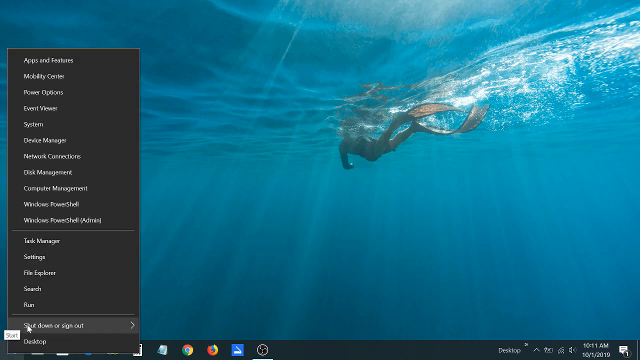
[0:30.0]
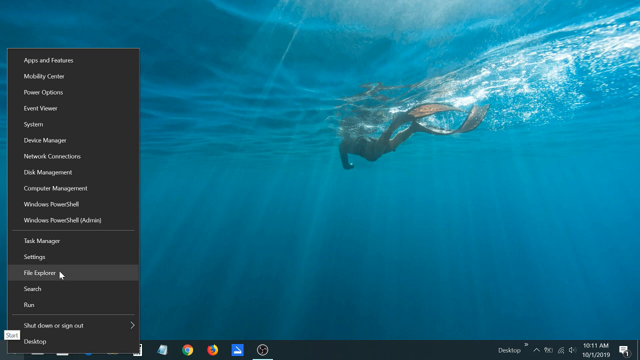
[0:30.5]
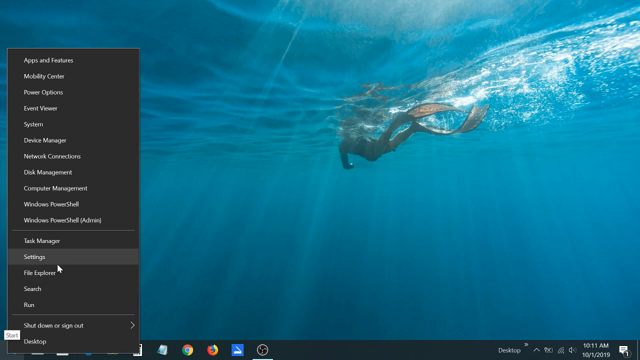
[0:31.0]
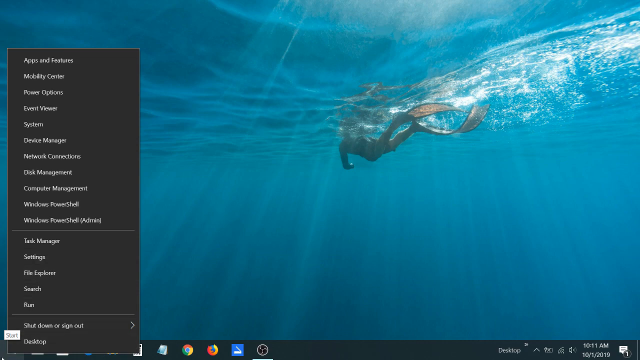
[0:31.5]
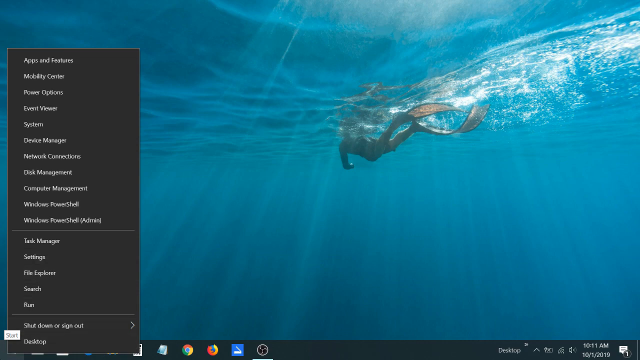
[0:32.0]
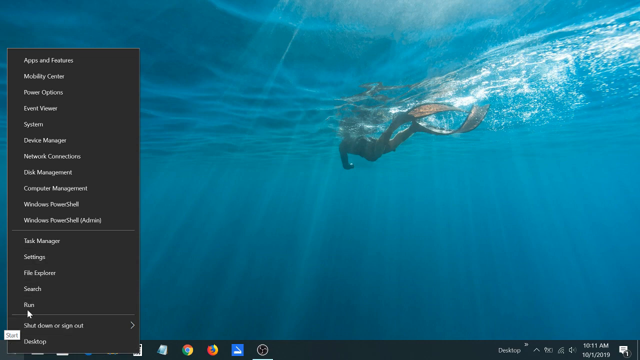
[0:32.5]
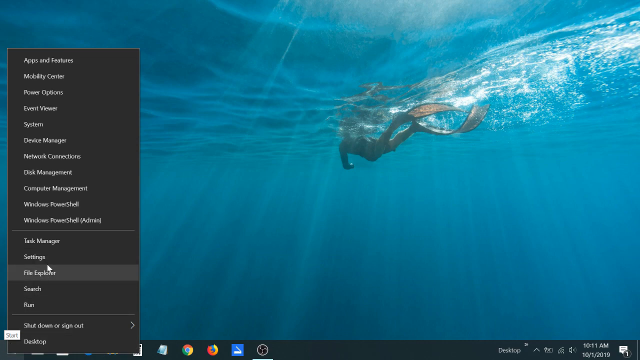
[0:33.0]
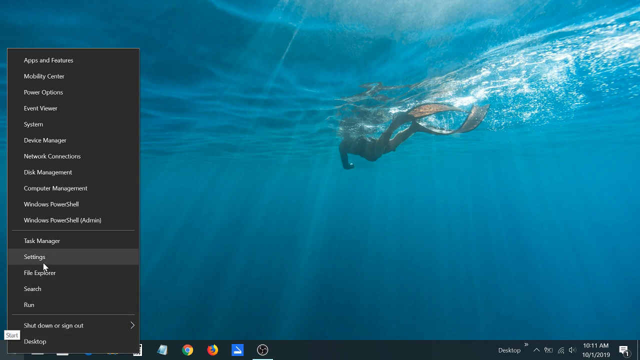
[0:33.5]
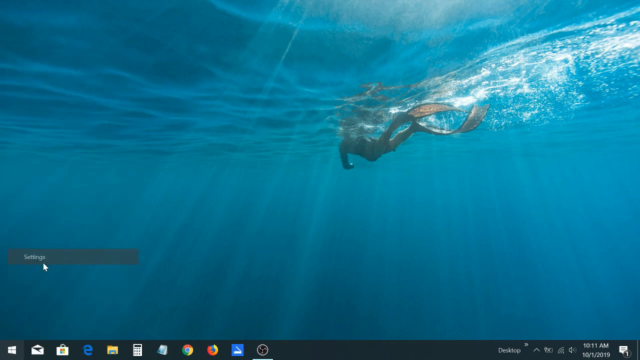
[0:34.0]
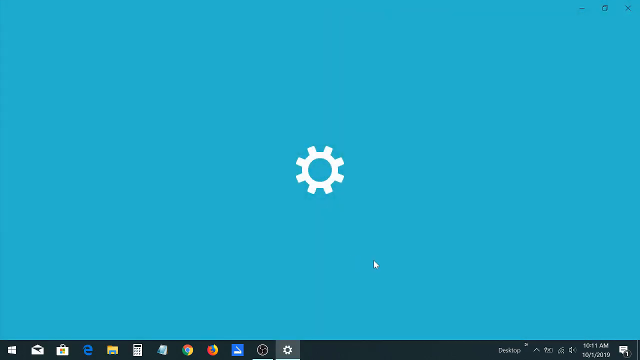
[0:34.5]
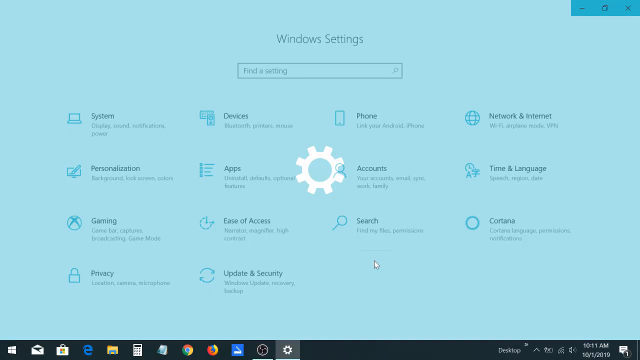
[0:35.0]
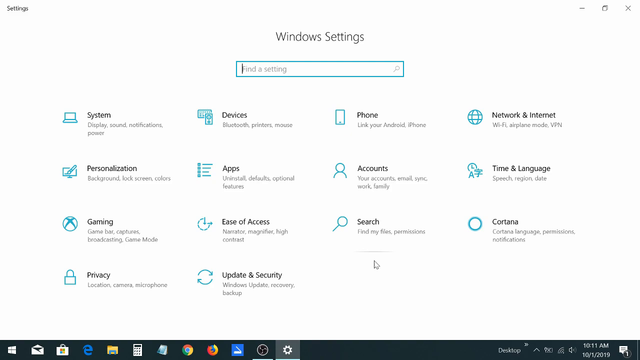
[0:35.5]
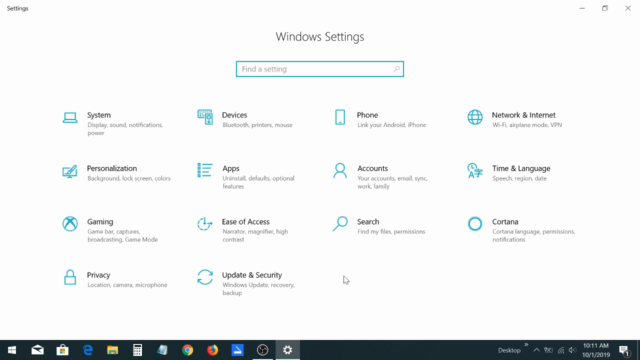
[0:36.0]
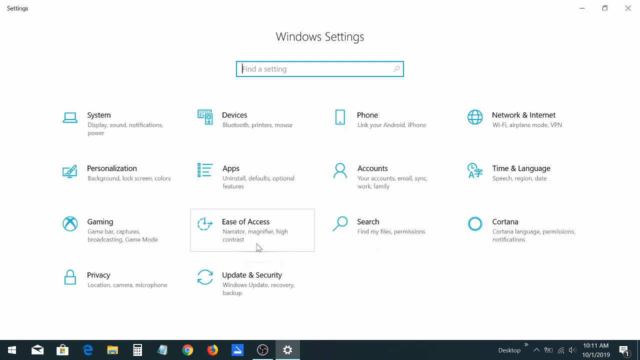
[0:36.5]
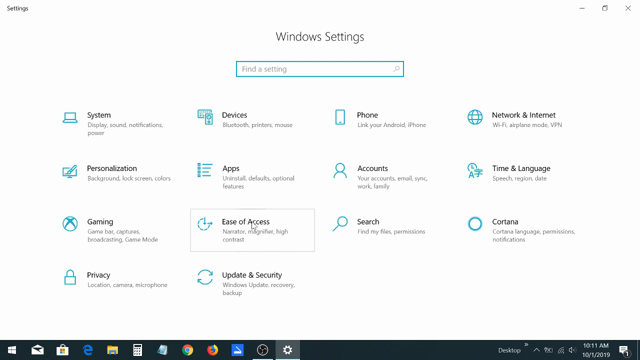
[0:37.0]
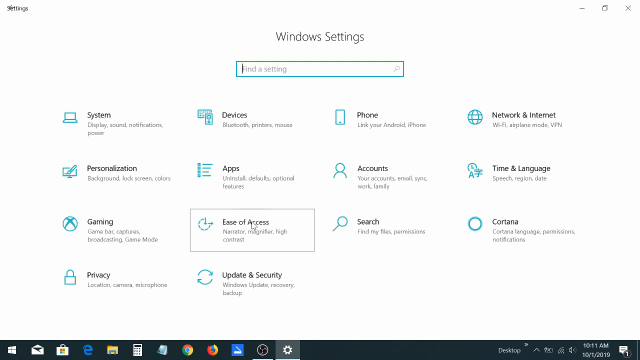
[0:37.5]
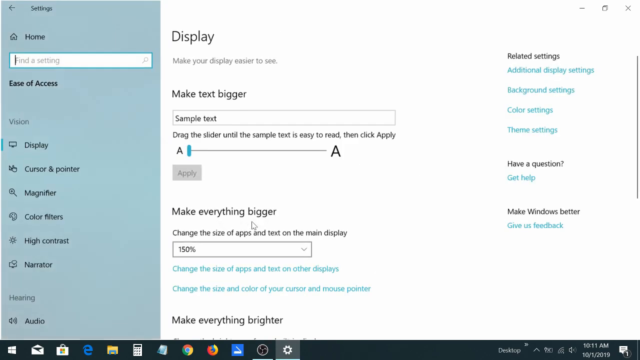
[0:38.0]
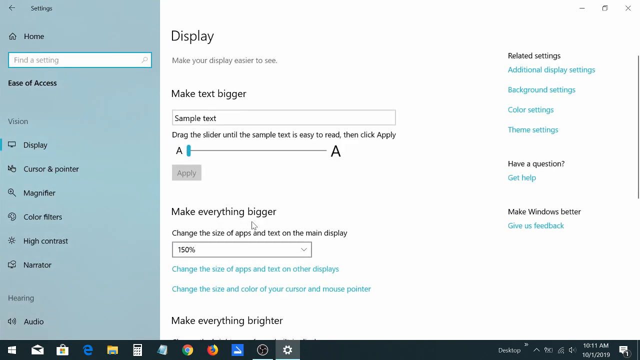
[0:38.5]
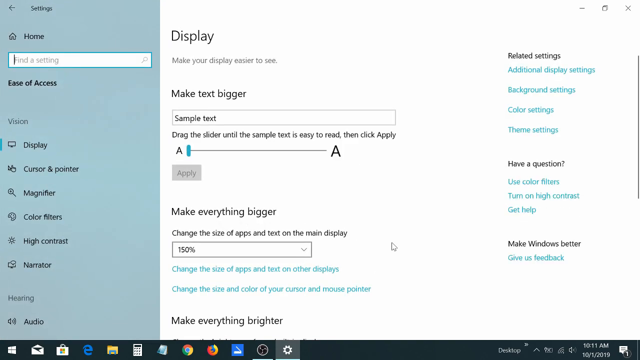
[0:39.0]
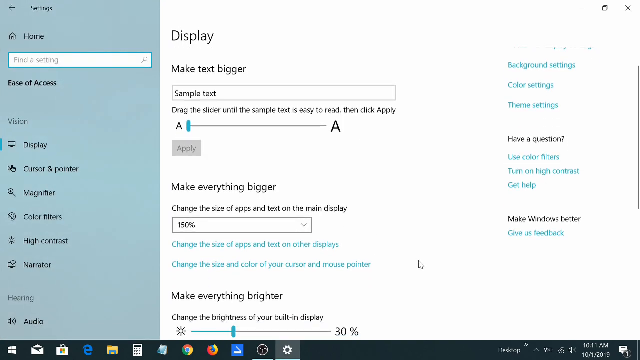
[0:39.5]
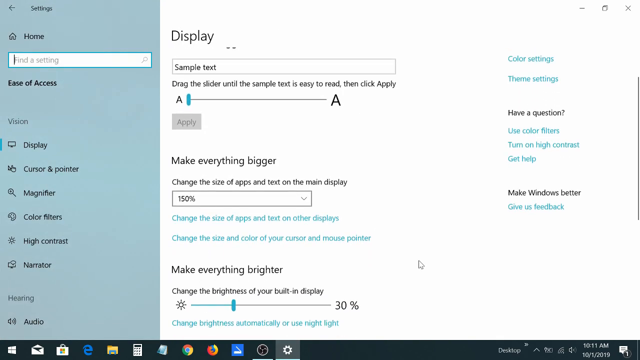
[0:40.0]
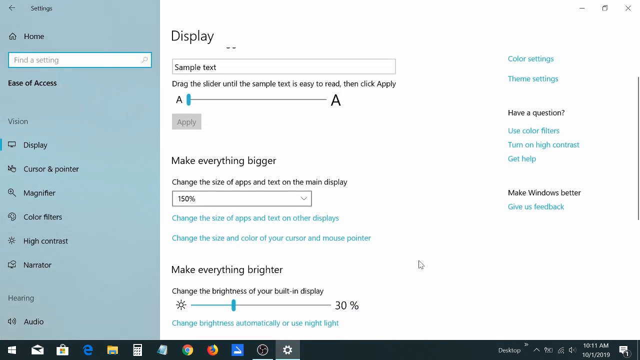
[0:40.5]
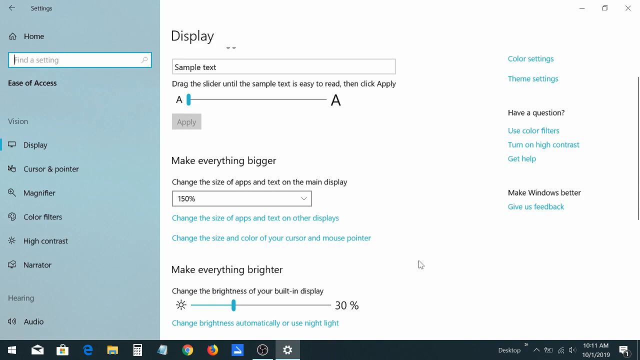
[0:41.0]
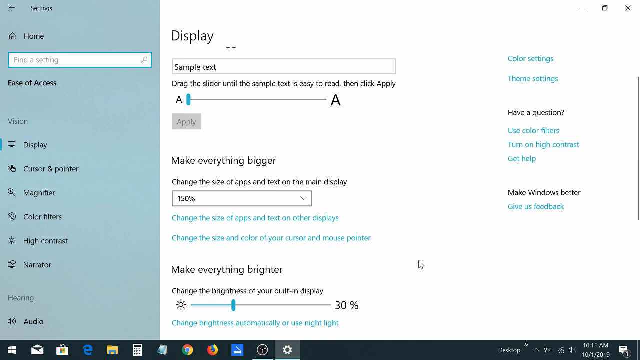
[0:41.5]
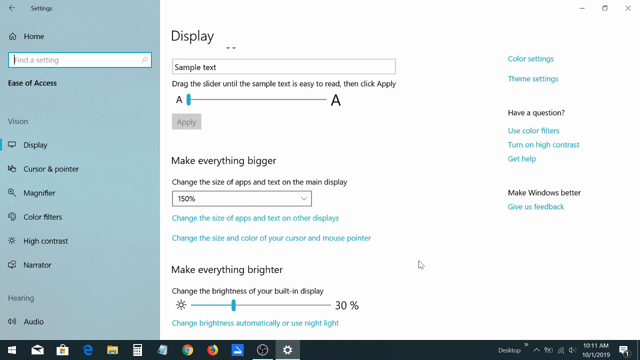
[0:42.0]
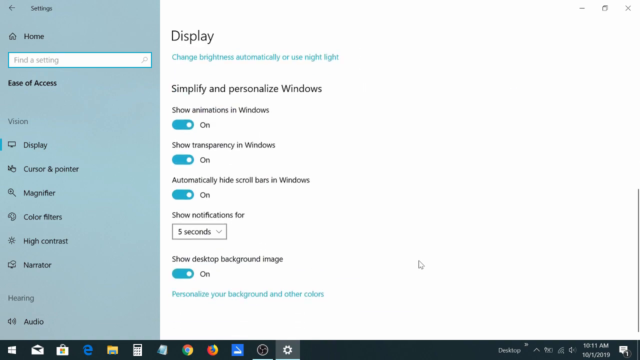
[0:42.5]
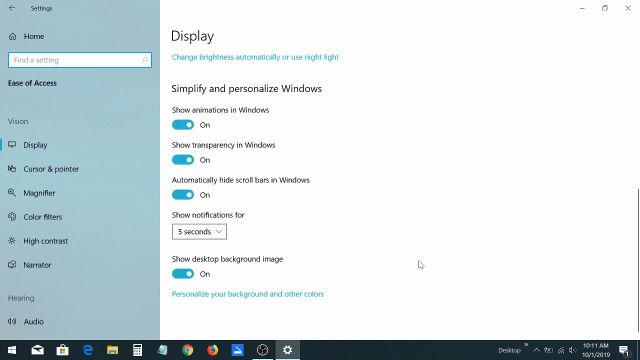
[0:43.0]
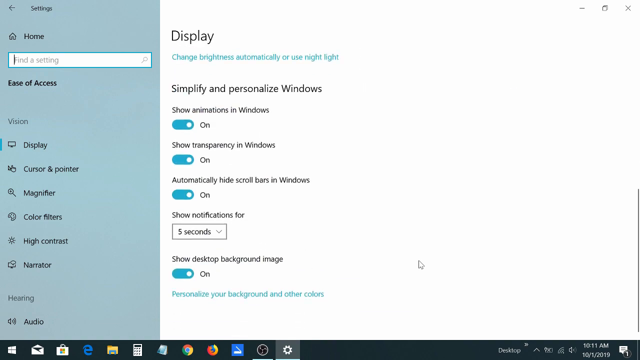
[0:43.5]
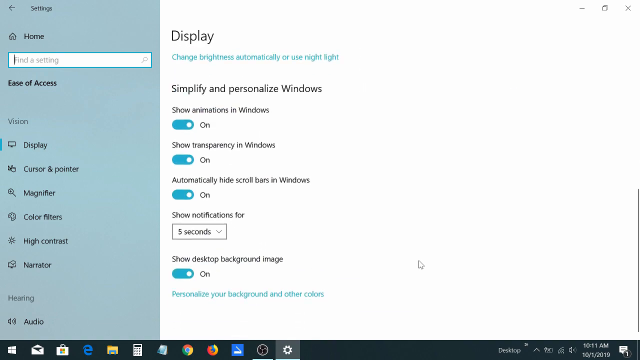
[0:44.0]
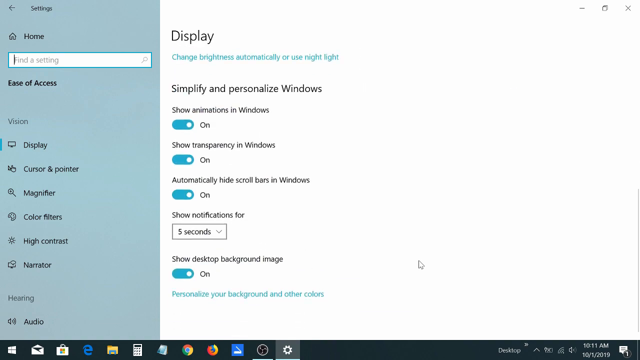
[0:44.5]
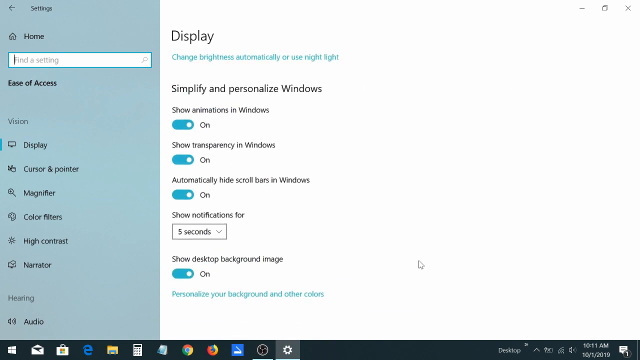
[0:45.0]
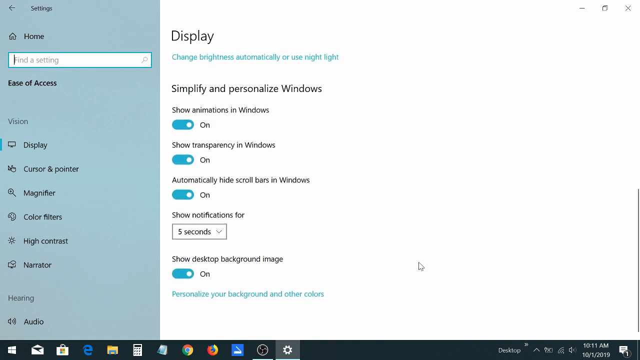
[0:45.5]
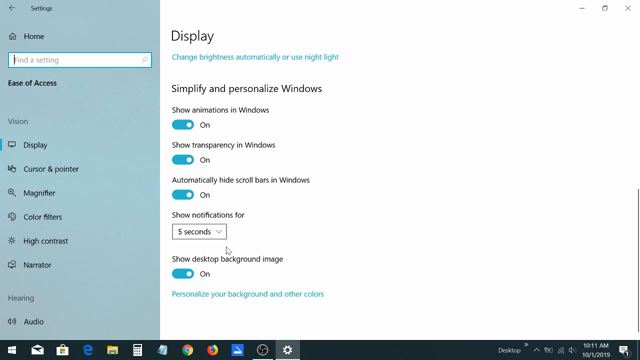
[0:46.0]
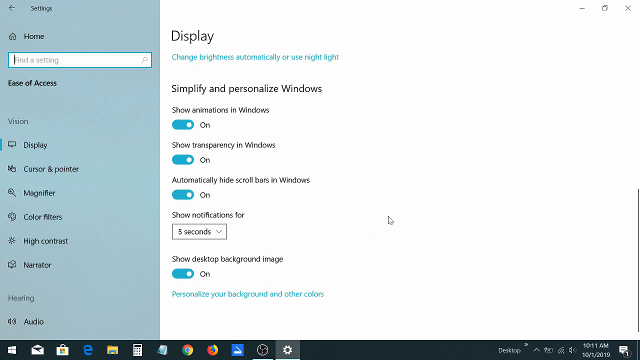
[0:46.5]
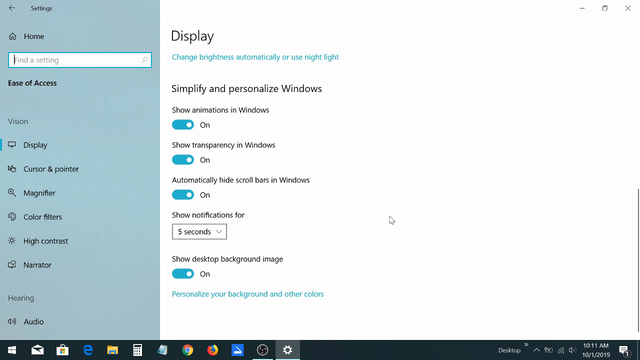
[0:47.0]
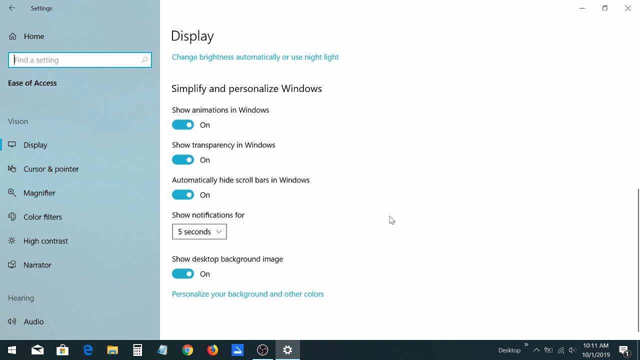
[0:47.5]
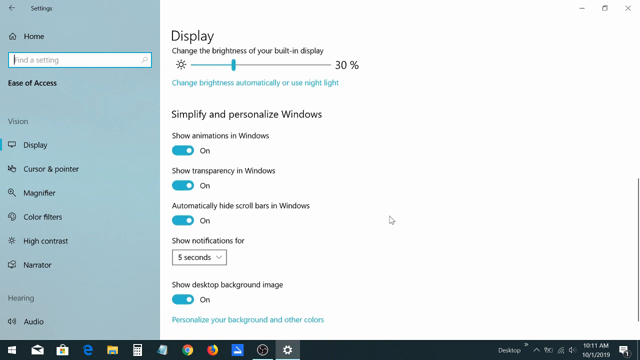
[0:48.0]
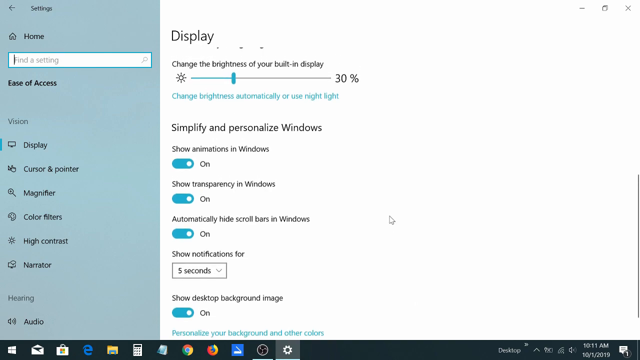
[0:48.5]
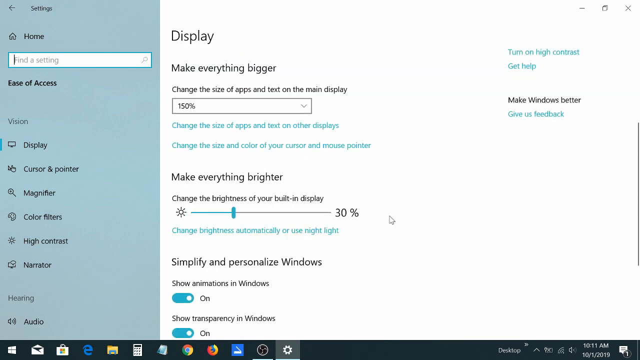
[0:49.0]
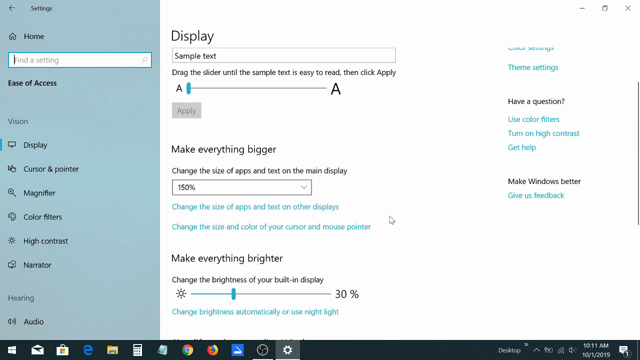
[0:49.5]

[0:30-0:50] On the desktop, with its ocean wallpaper showing the scuba diver swimming, the mouse is on the Windows taskbar, which is extended and black. The person clicks on settings, goes into Windows settings and opens the display section. They scroll down the display settings, move the mouse around a little, then scroll back up and come out of that section.